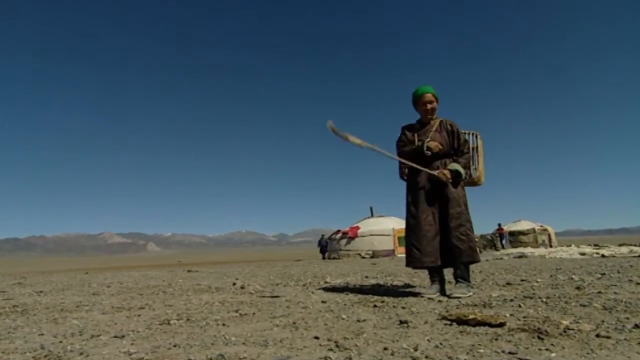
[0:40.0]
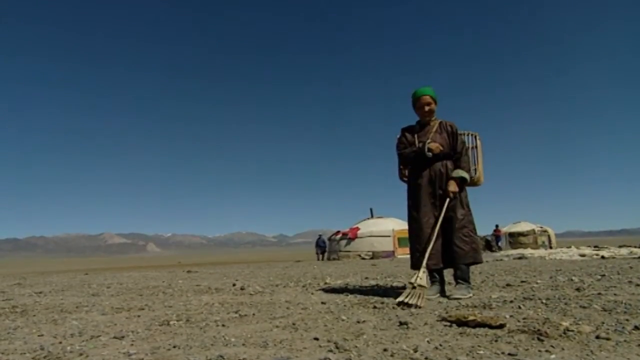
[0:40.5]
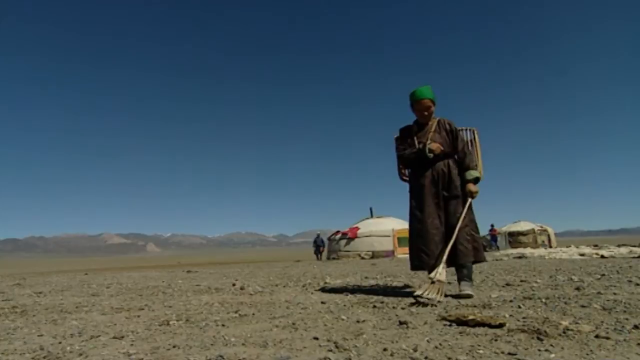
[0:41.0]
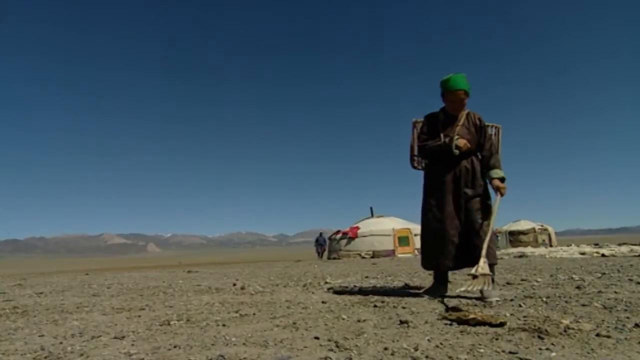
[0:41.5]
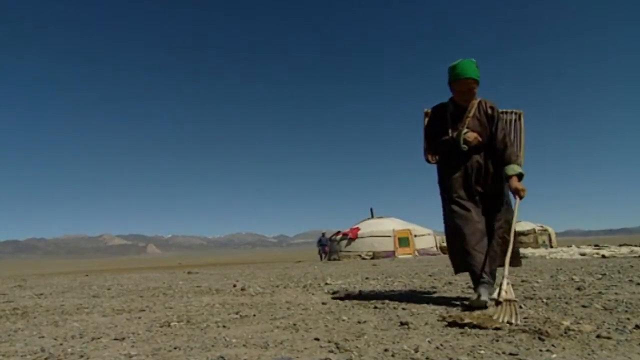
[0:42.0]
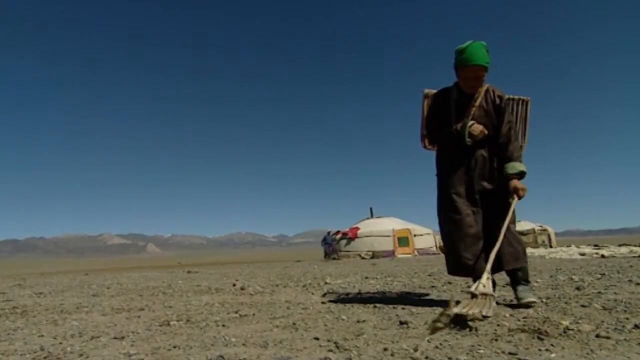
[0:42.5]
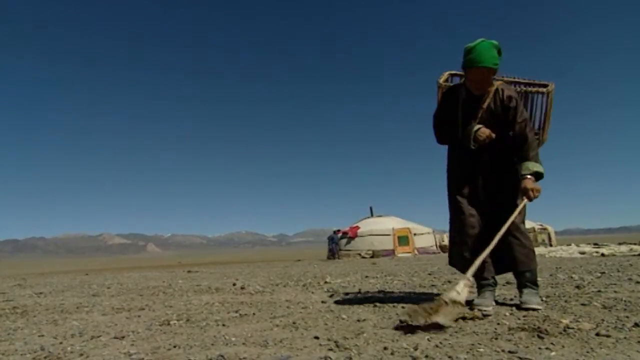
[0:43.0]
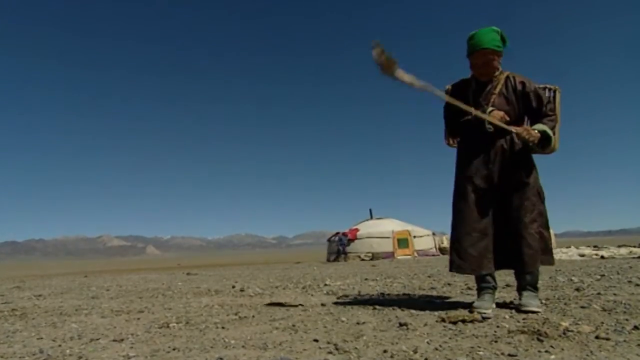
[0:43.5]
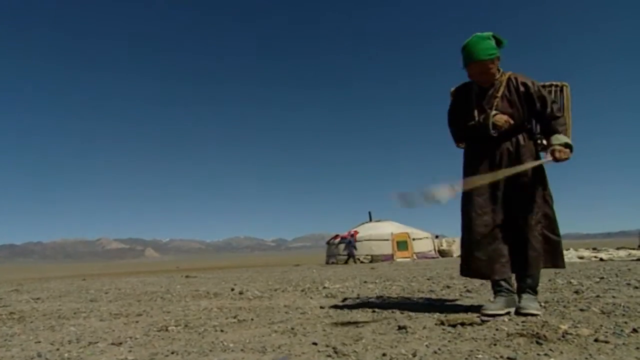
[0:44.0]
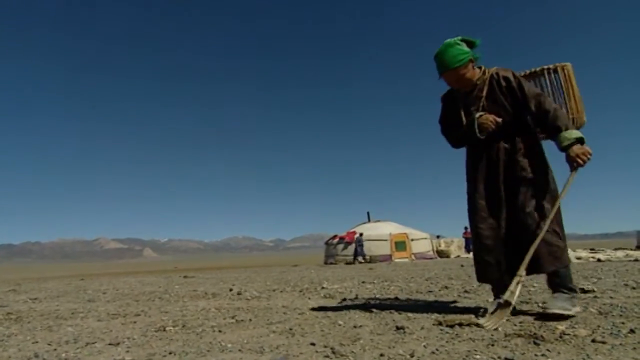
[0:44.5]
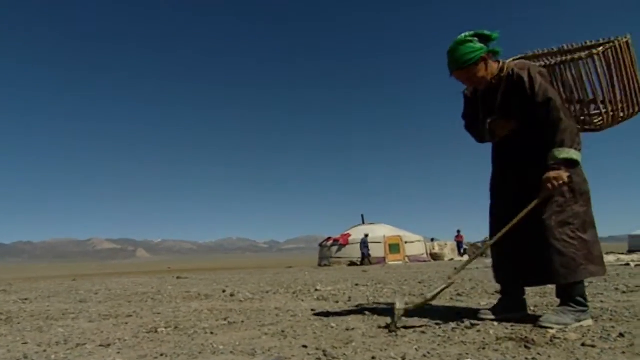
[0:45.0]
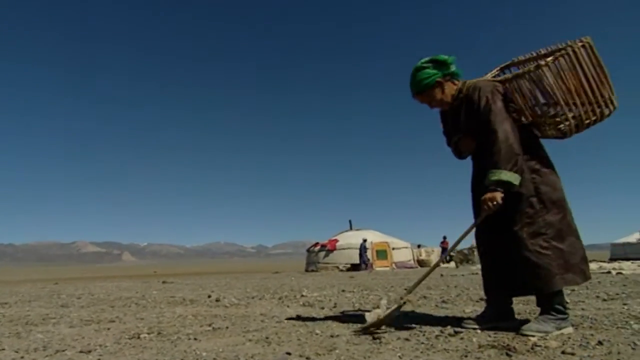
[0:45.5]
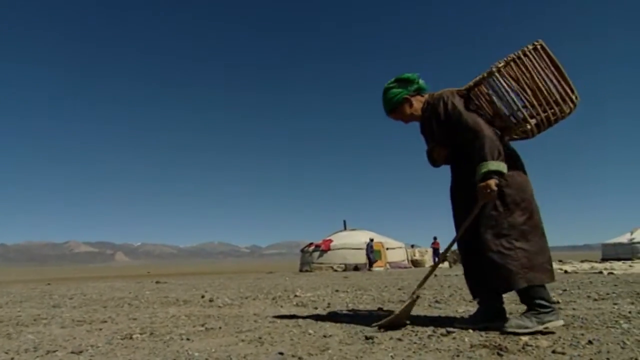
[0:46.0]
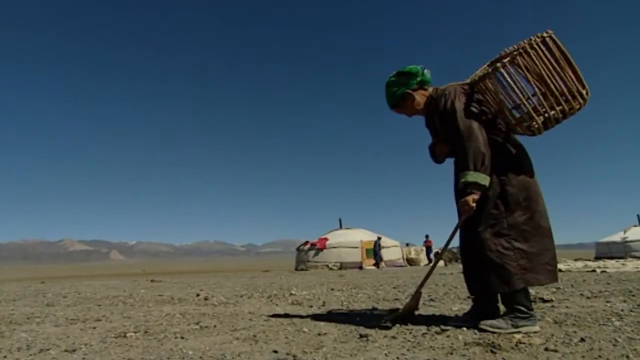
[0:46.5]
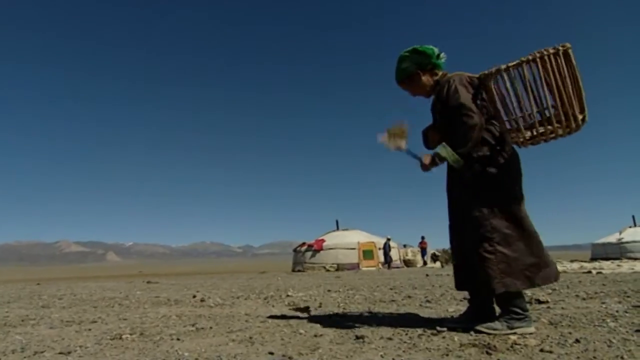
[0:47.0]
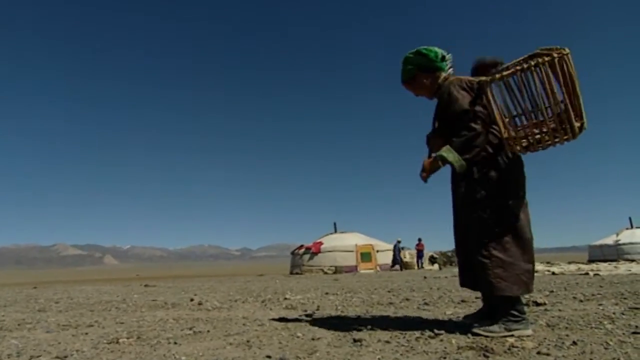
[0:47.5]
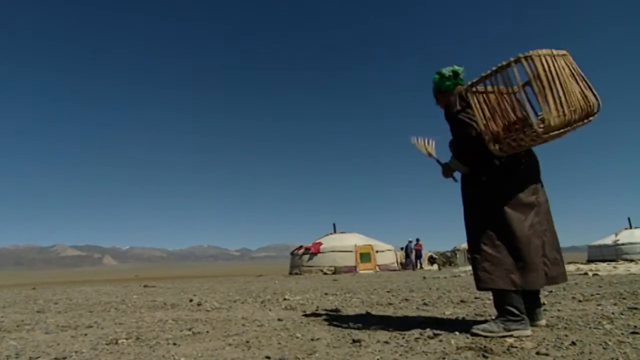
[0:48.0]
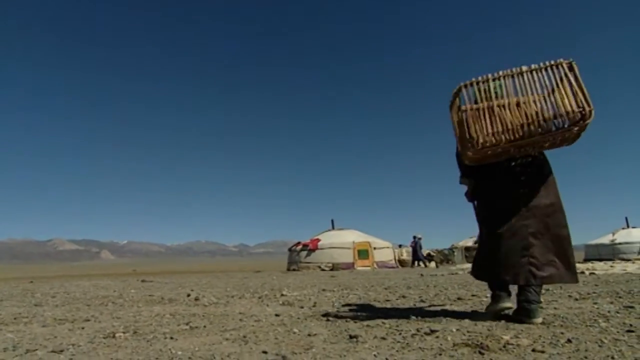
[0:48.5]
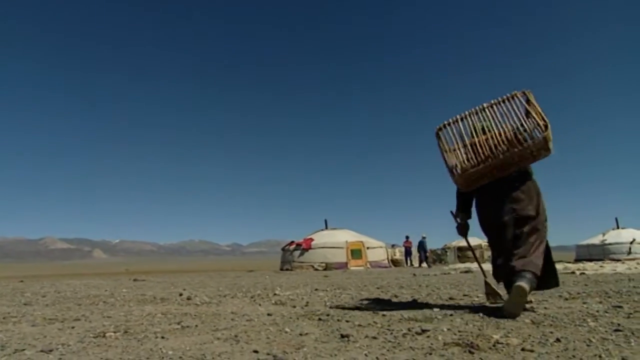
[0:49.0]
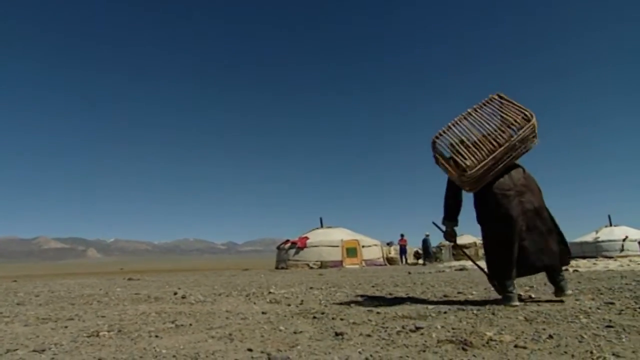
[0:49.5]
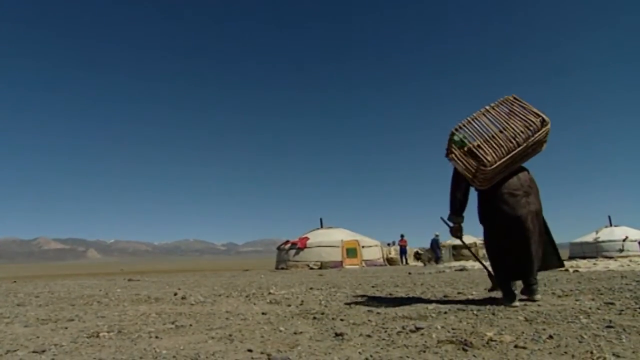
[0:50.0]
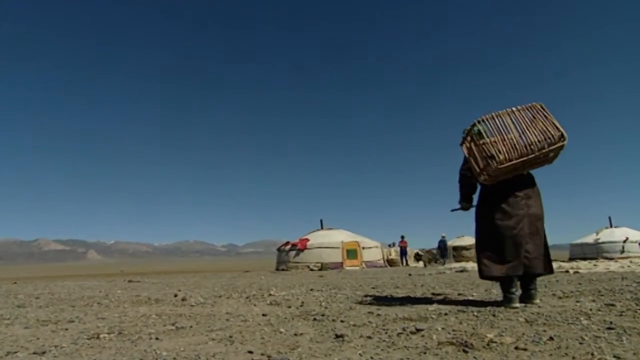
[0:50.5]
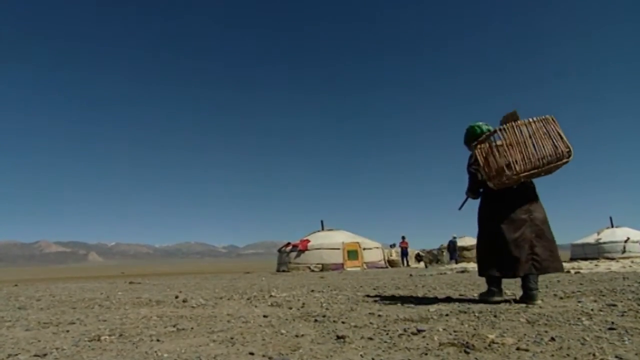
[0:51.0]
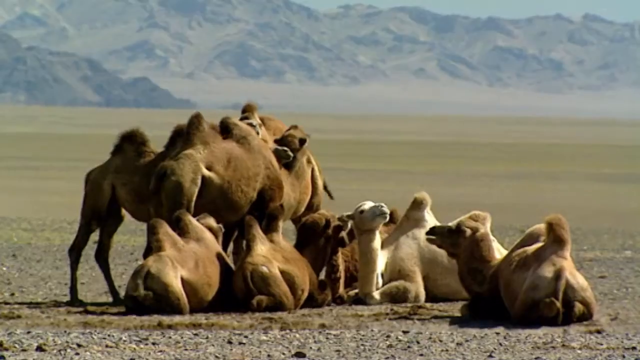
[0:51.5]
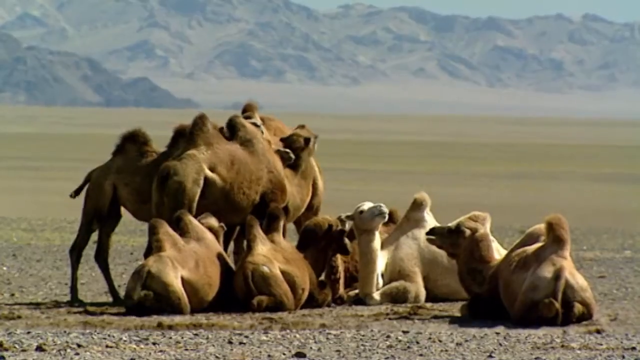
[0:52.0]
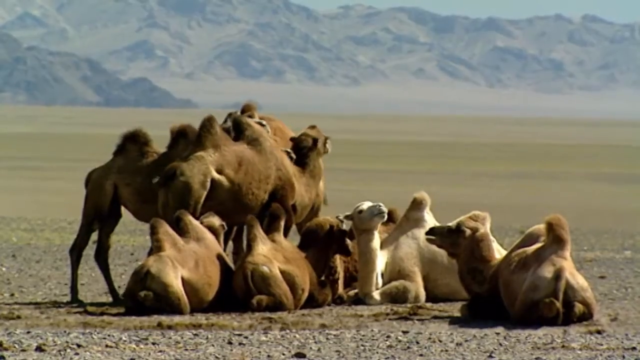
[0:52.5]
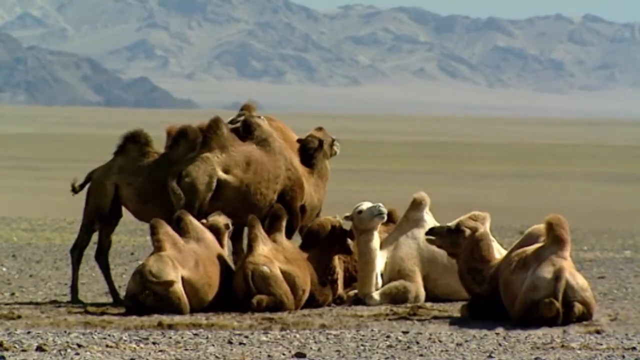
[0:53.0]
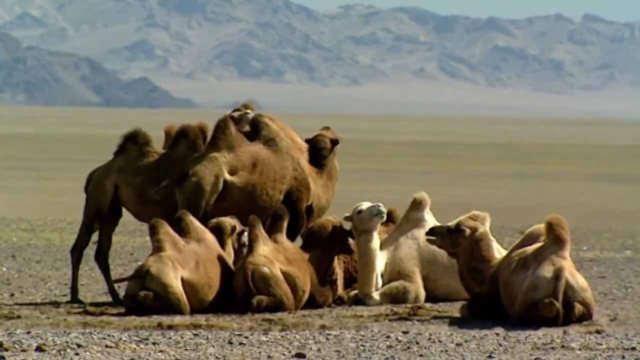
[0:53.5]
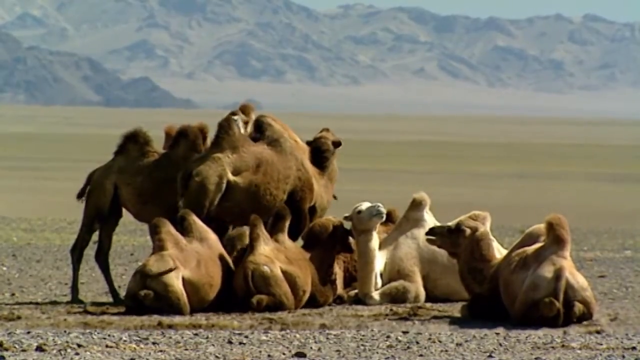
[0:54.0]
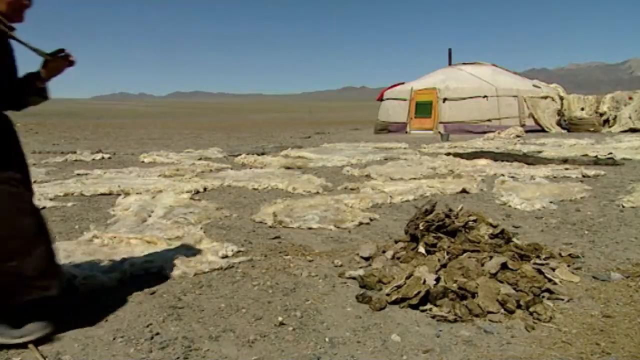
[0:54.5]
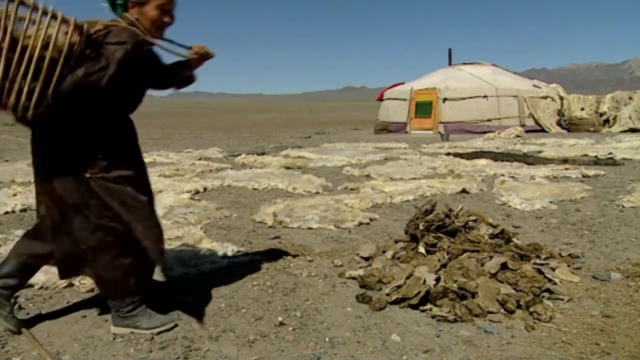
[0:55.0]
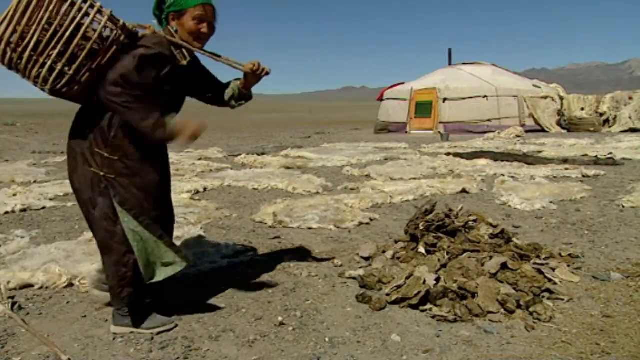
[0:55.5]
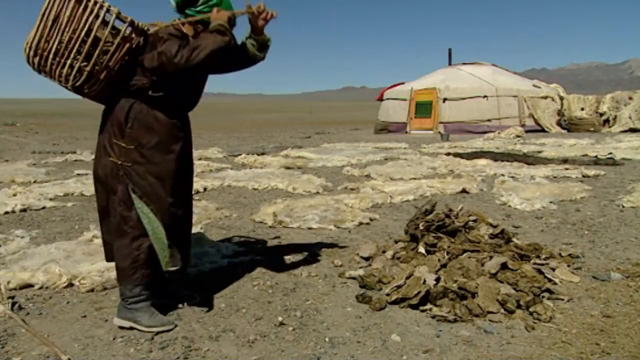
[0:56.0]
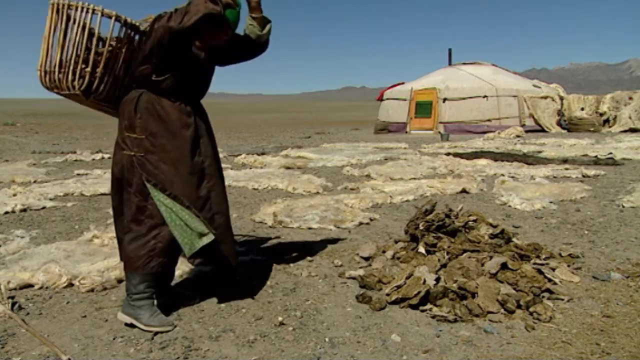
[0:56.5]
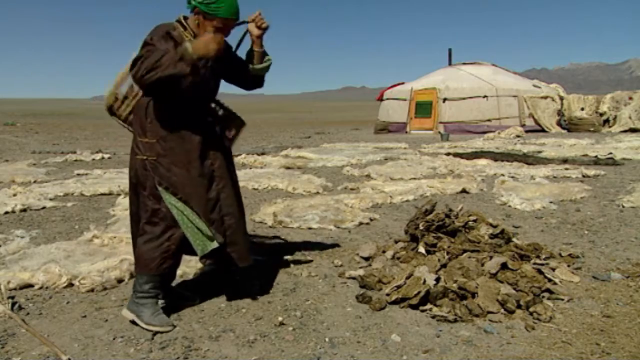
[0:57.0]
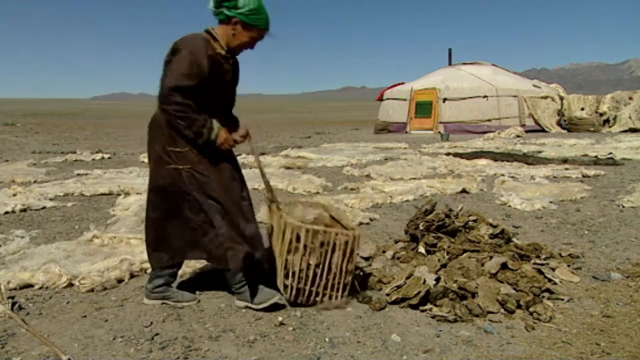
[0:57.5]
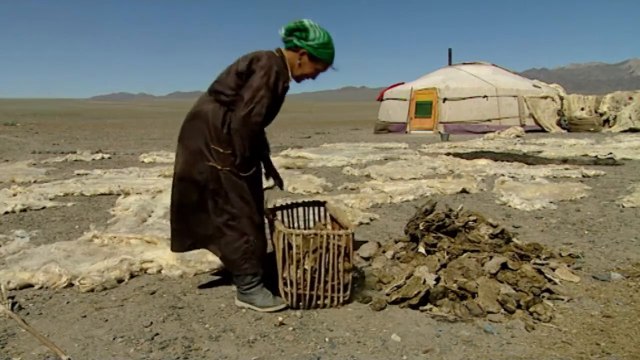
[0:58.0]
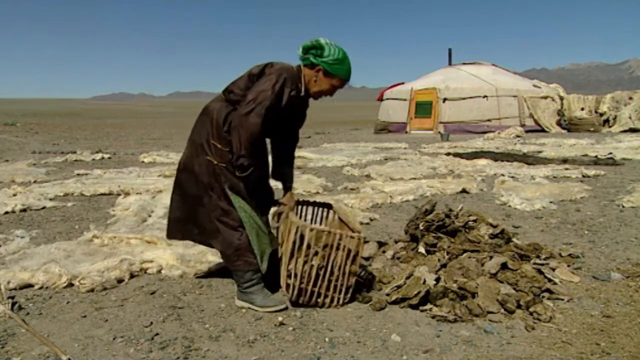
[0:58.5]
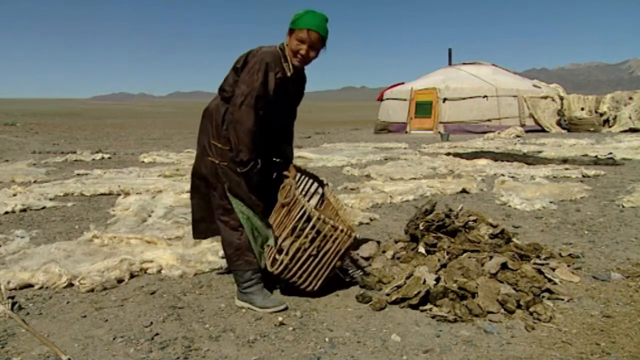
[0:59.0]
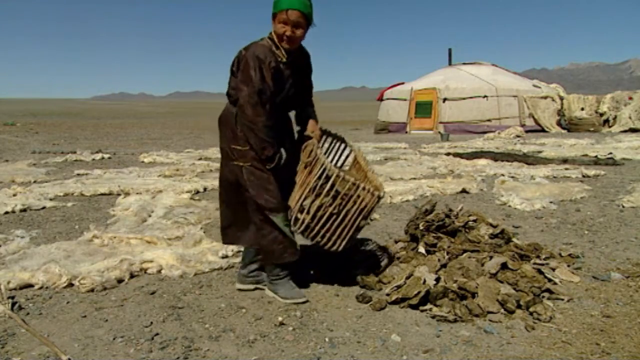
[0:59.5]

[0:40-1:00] Under a blue sky, a woman in a full dress with a white scarf tied on her head holds something like a stick with a flat-surfaced object fixed at its tip. She has a bucket on her back, and two brown tents are in the background. She uses the object to collect materials from the ground: with her leg she places the material into the flat object on the stick and throws it back into the bucket. The scene shifts to a group of camels, some lying and some standing, with a flat surface behind them and mountains at the farthest end. The woman then comes to a place where there is a collection of the things she was gathering and takes out the bucket.